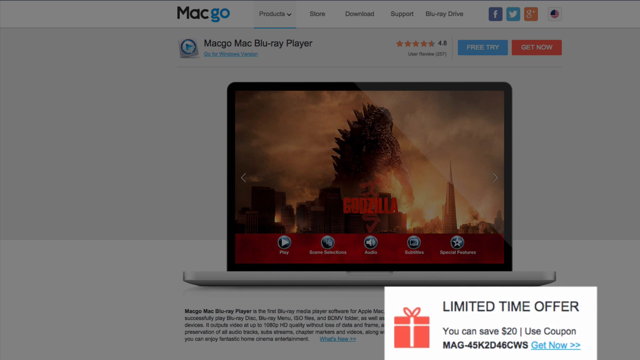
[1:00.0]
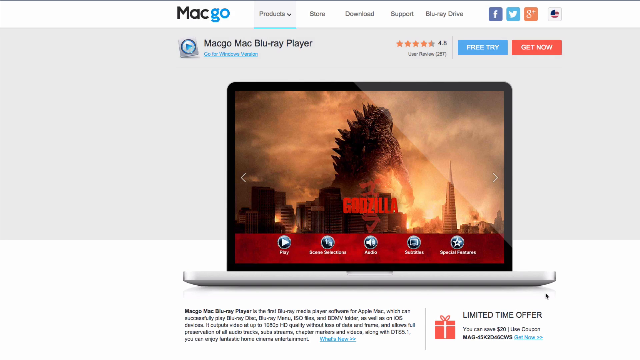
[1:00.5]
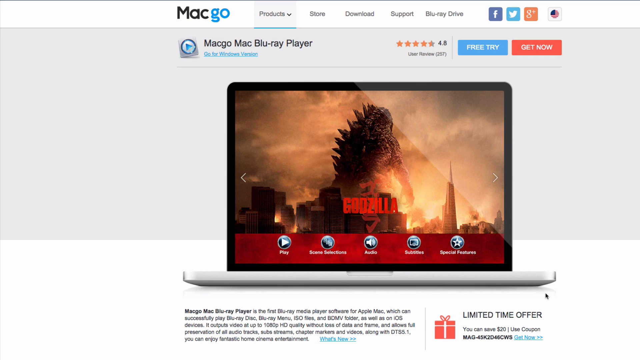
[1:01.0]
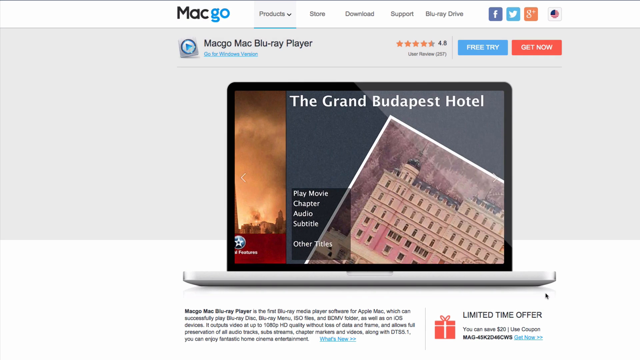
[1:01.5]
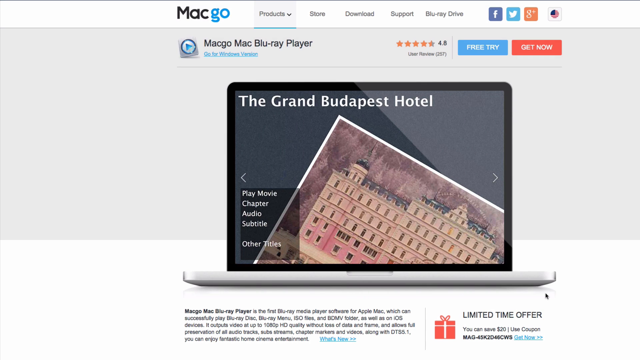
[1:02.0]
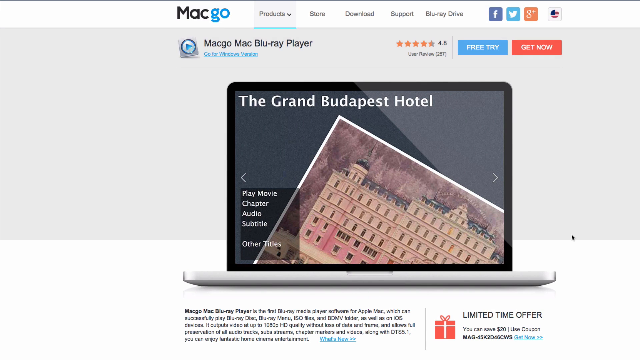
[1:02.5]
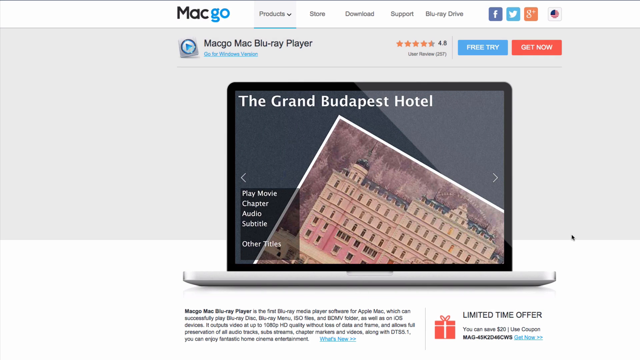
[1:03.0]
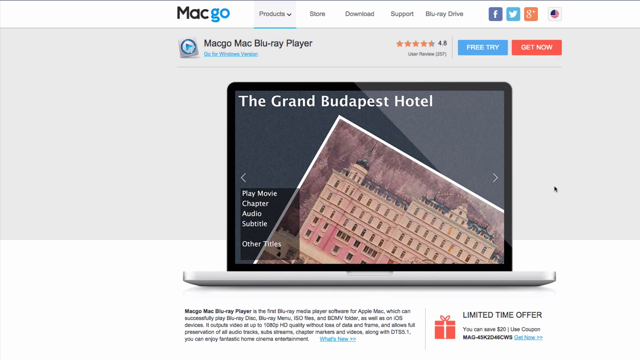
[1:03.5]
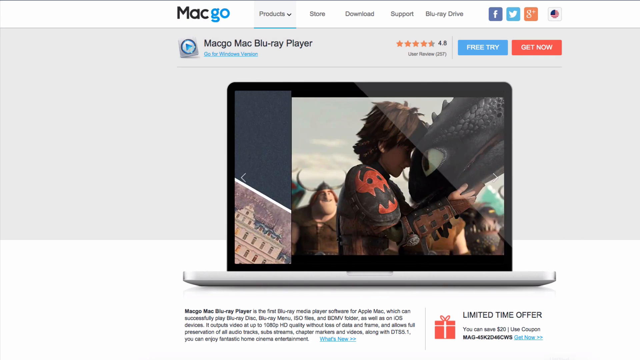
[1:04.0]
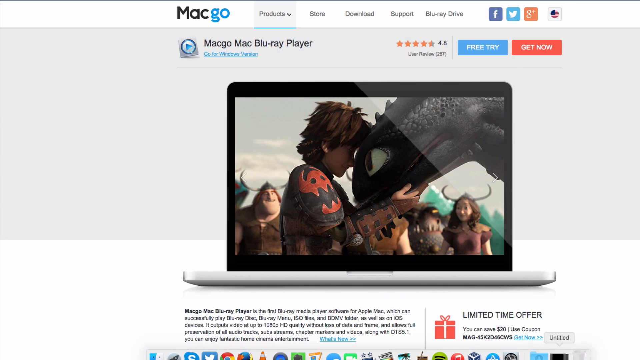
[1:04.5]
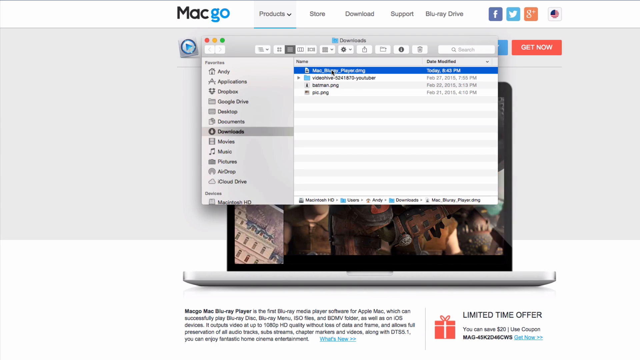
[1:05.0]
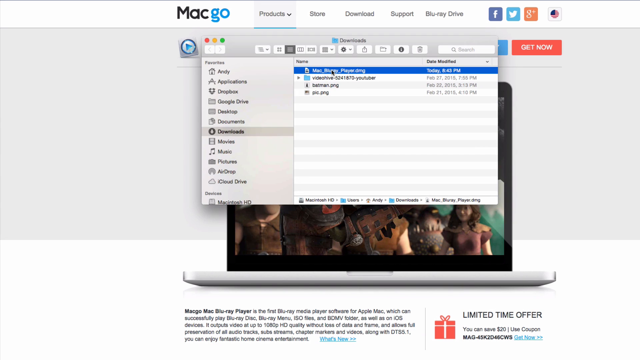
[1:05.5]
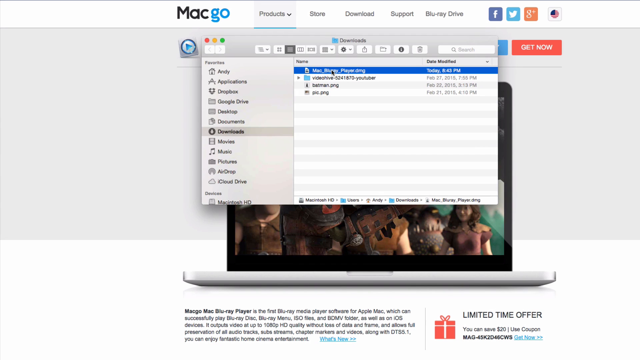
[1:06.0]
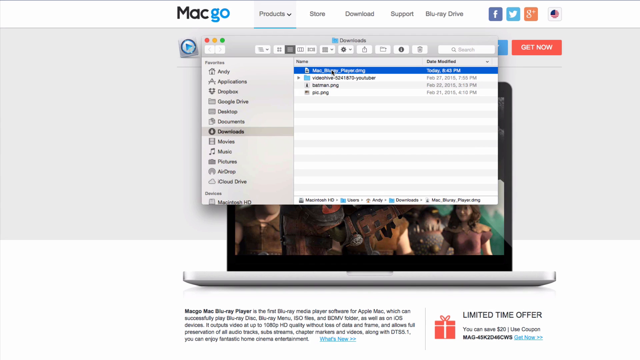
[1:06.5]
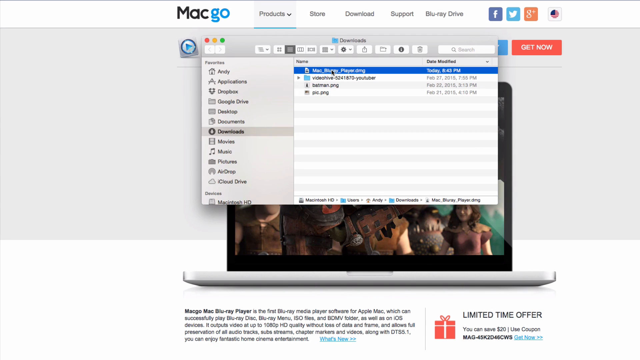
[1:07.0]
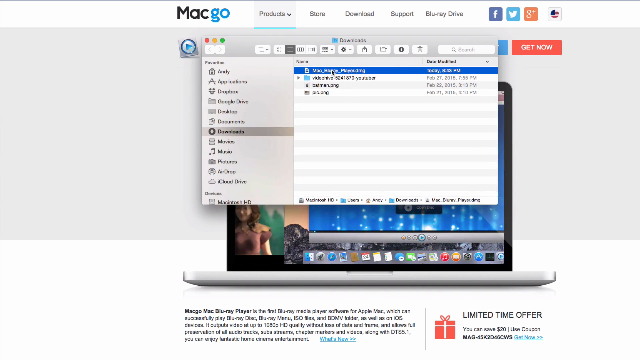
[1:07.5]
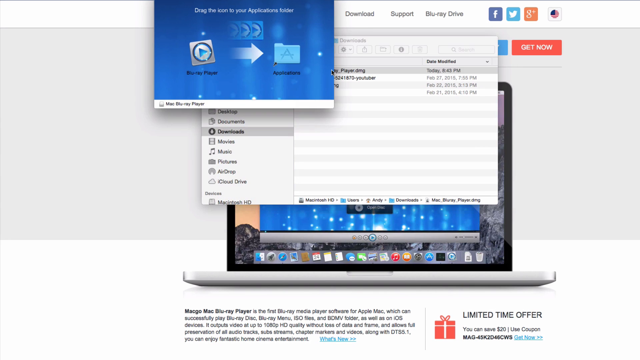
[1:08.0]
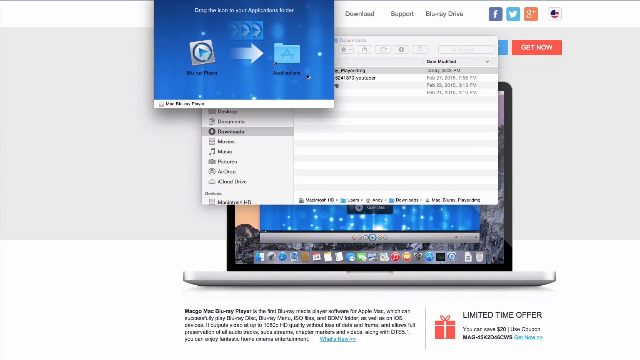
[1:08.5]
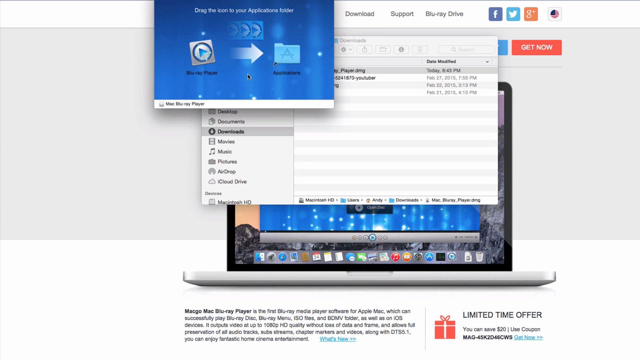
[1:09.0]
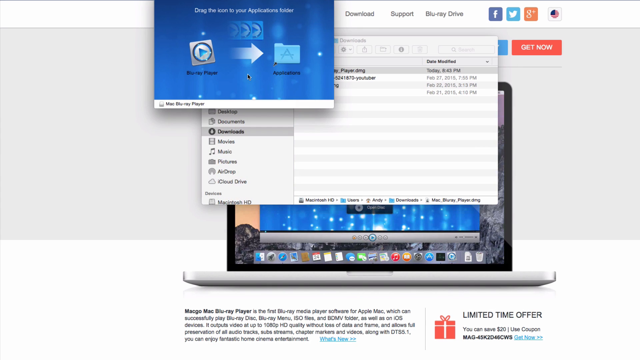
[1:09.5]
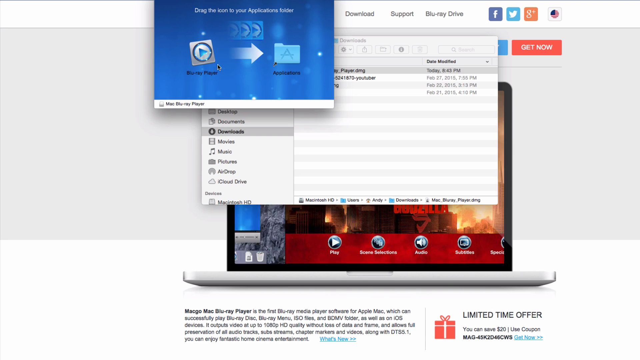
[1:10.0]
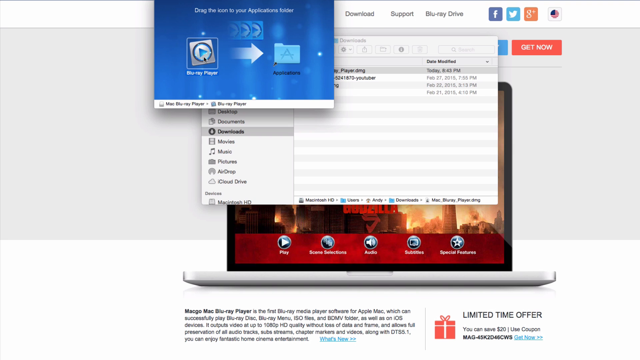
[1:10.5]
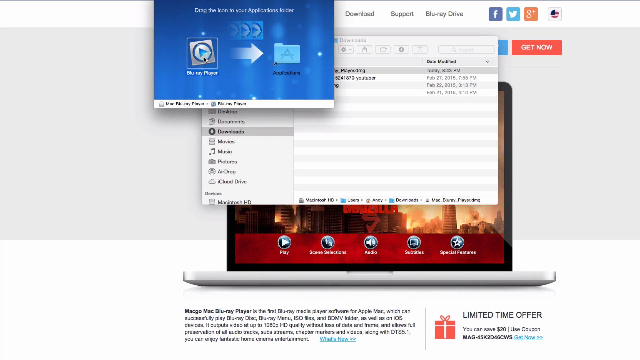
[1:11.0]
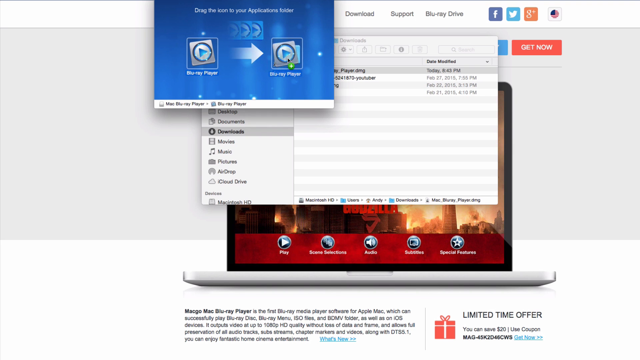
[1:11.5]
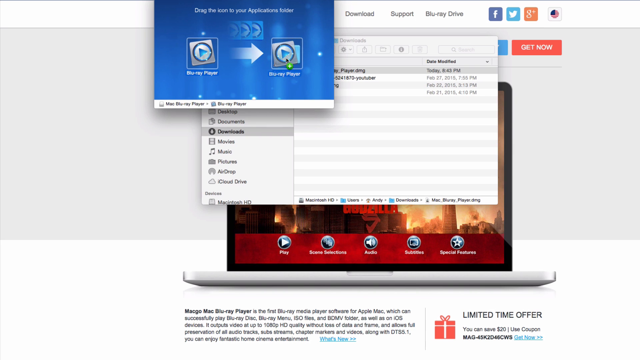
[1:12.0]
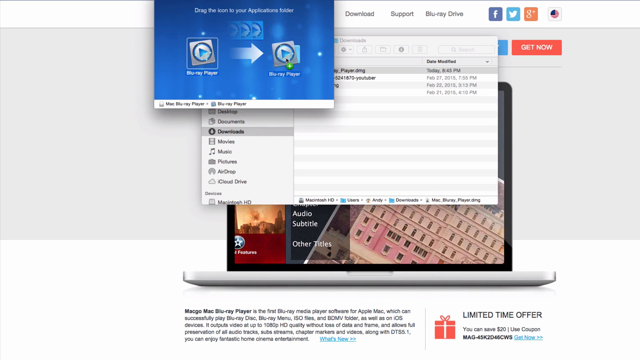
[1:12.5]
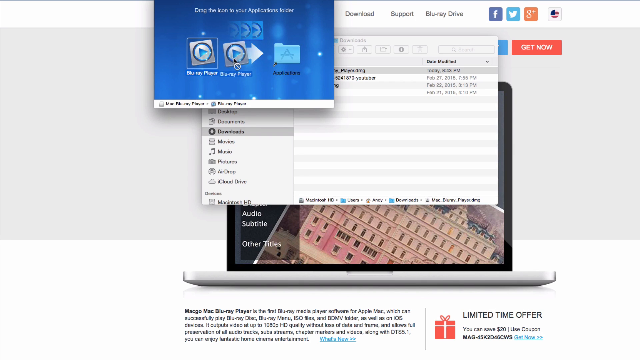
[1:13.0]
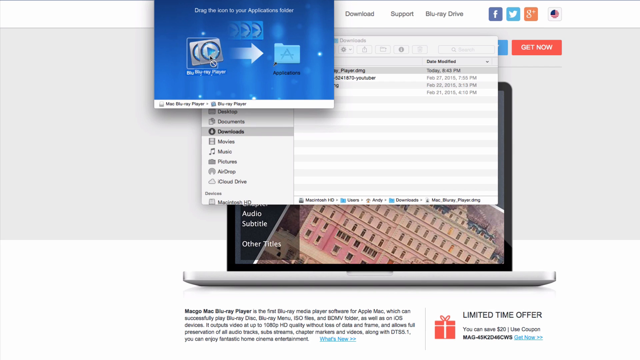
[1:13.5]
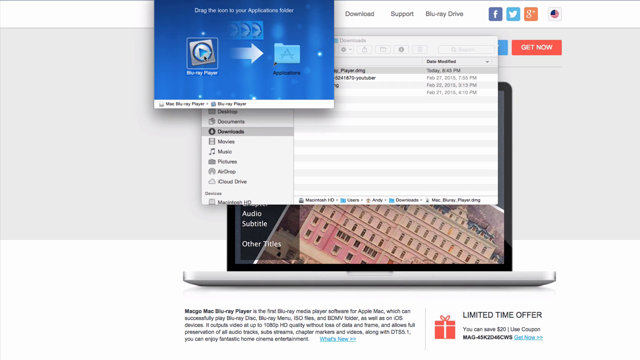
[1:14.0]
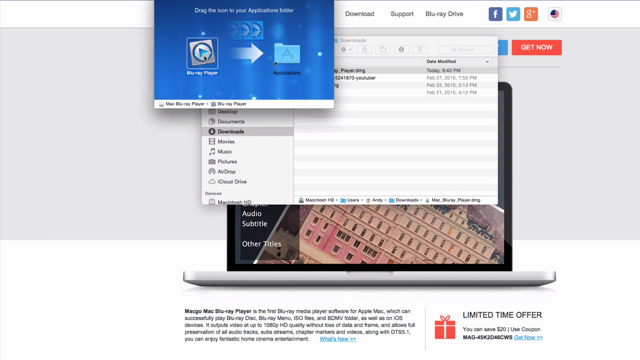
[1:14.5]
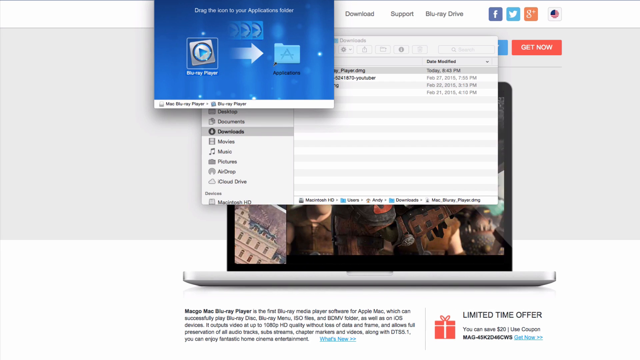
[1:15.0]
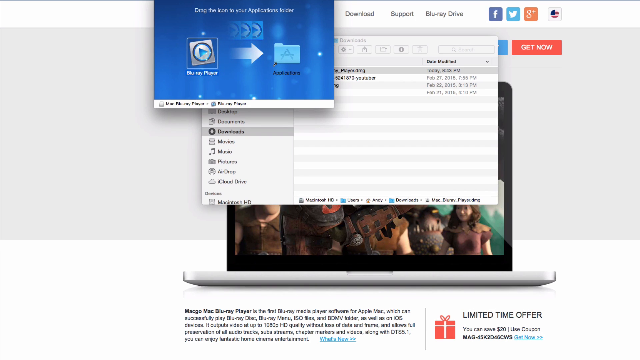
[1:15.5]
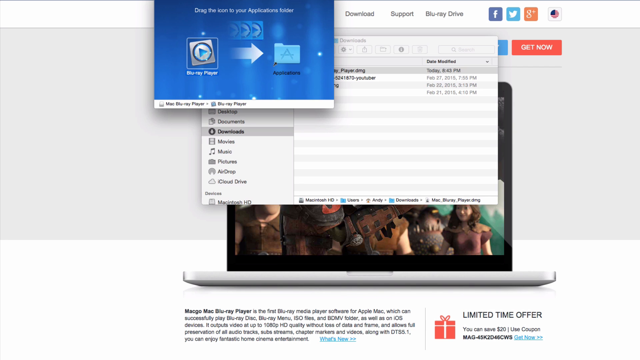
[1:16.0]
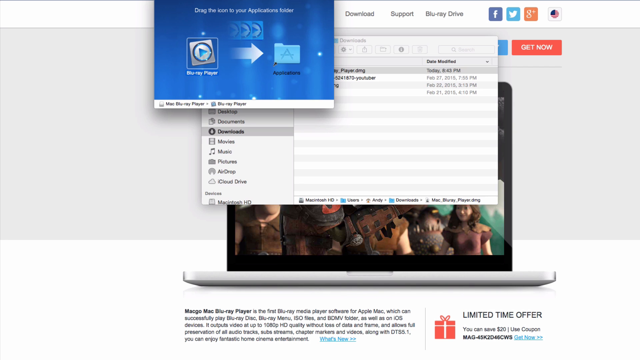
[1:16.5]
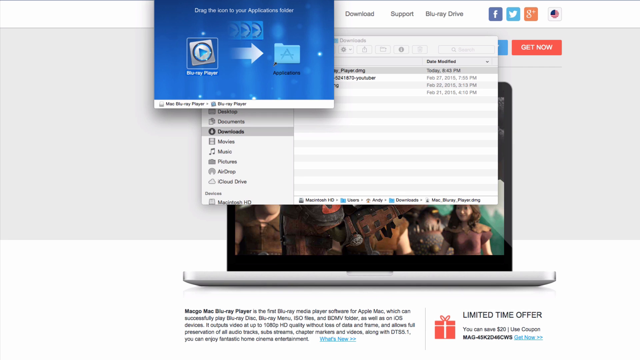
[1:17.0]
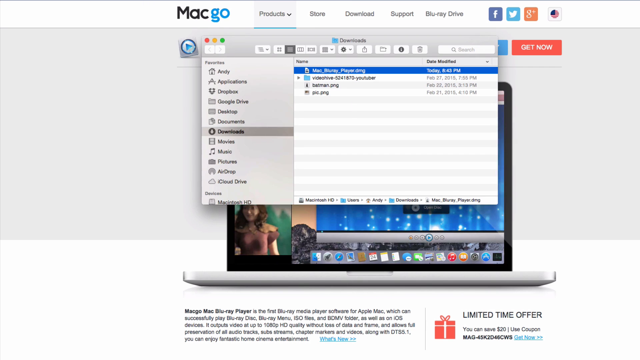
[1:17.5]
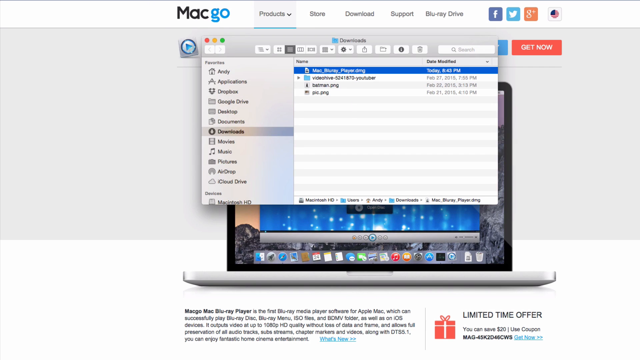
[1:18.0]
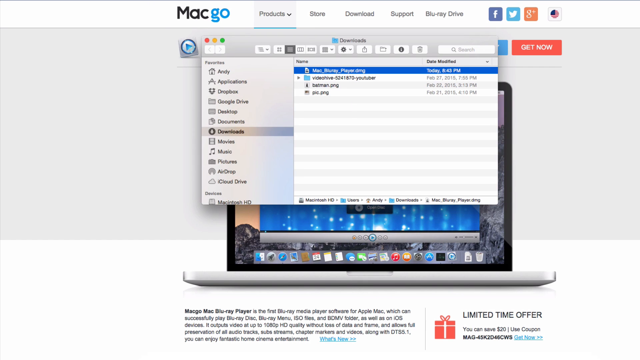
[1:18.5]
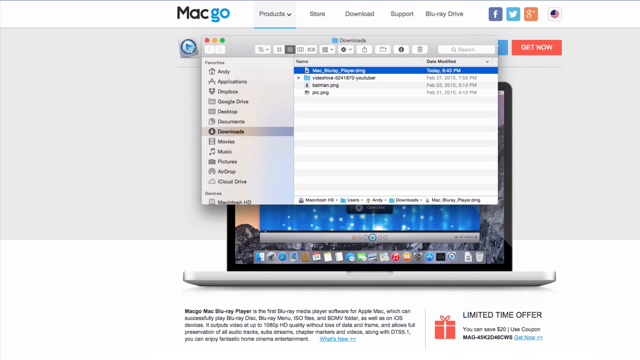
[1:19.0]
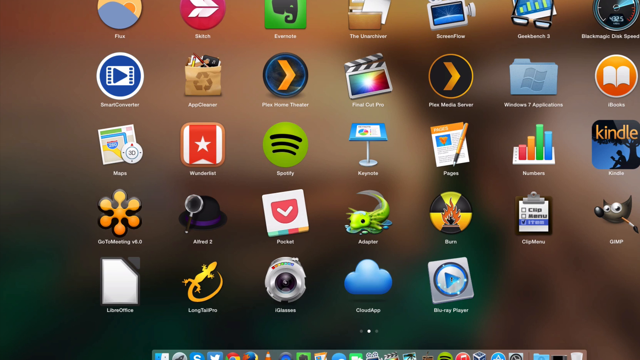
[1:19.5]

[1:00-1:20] The same screen continues on the Mac Go page. The person clicks on some type of drop-down menu, a blue screen pops up, and they click on Blu-ray Player, moving it to the right and then back to the left. The person's desktop is then shown.